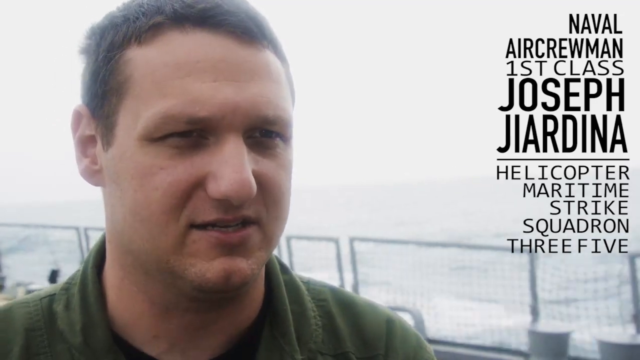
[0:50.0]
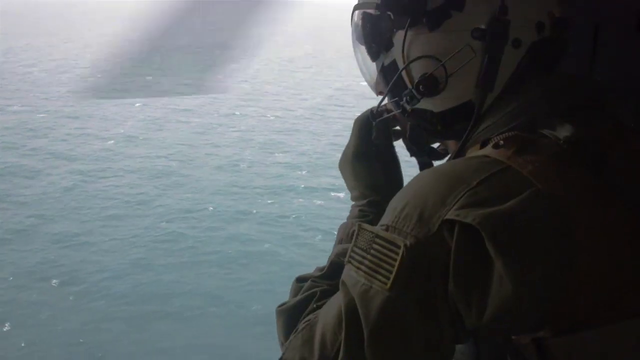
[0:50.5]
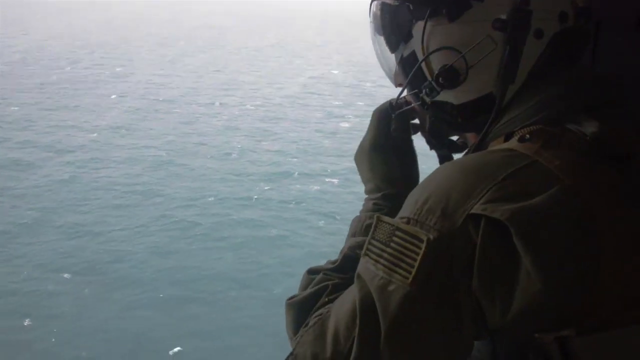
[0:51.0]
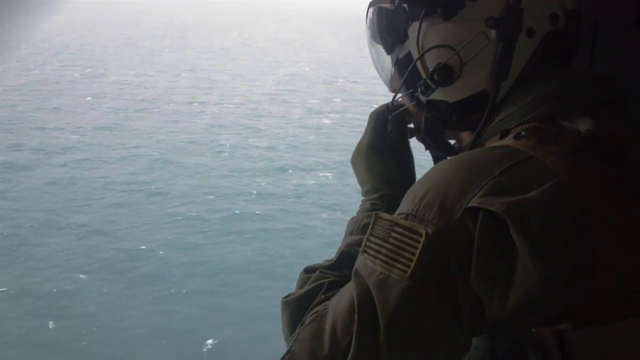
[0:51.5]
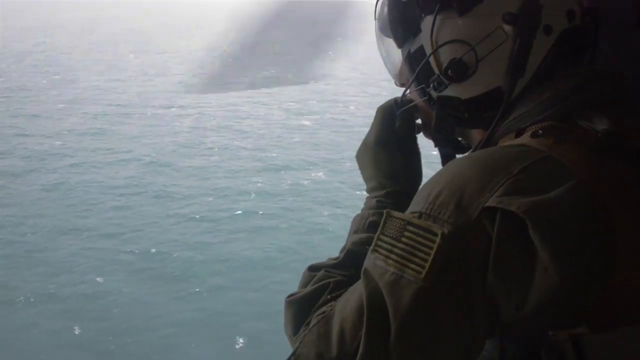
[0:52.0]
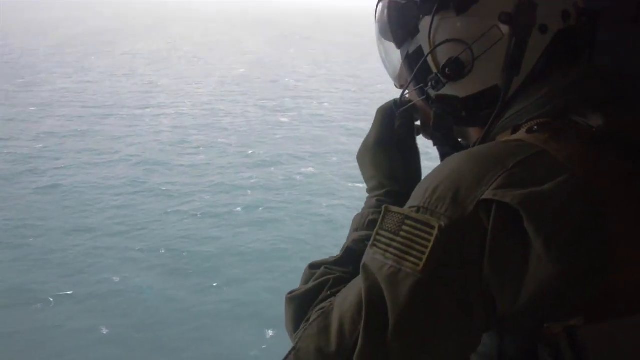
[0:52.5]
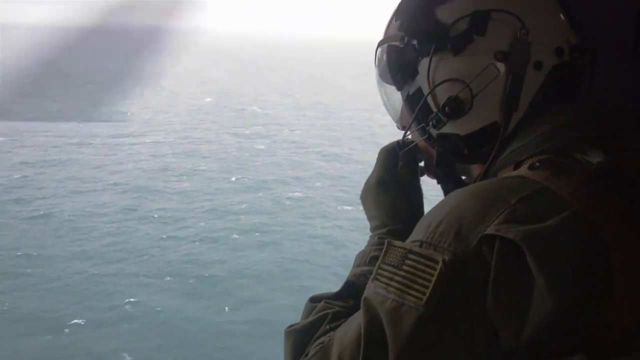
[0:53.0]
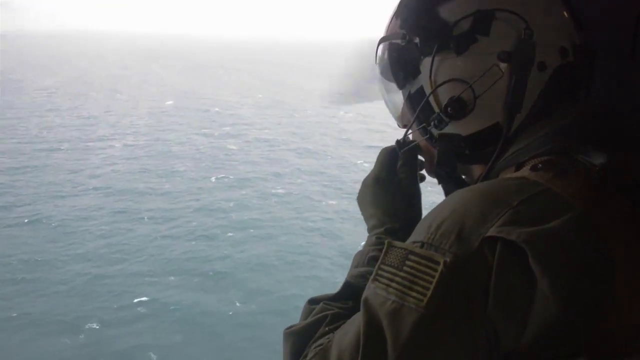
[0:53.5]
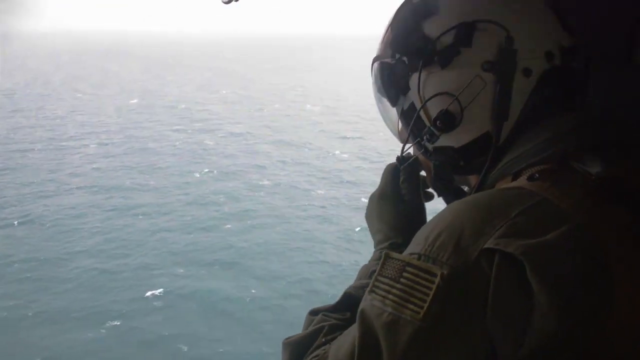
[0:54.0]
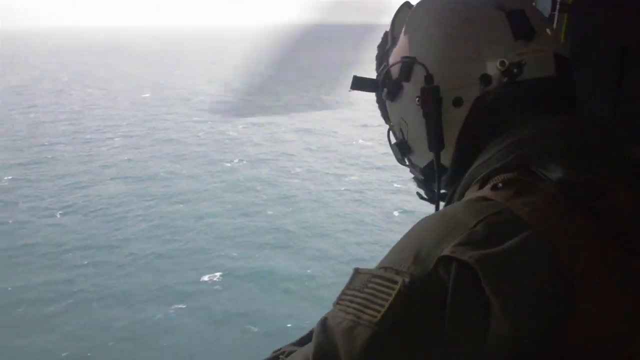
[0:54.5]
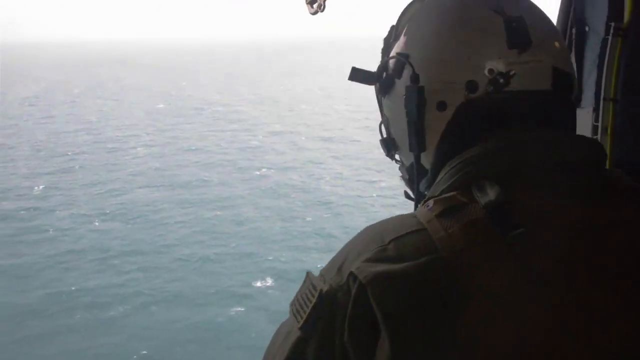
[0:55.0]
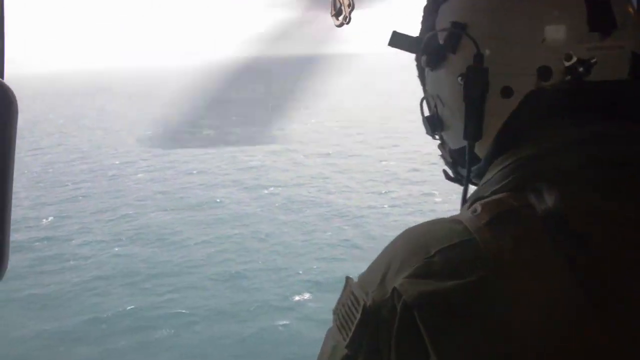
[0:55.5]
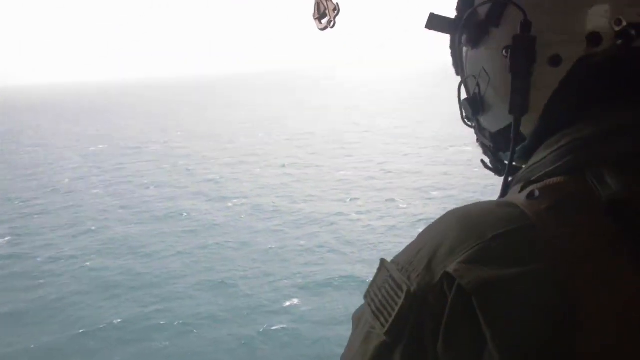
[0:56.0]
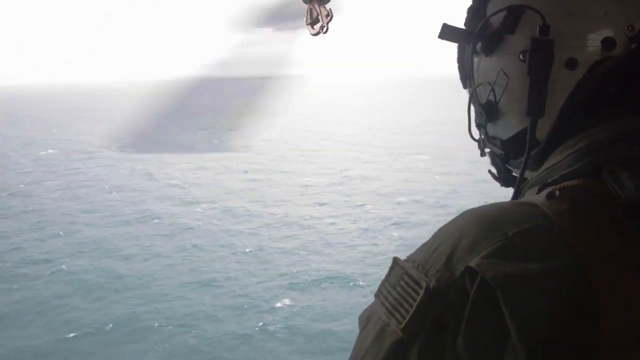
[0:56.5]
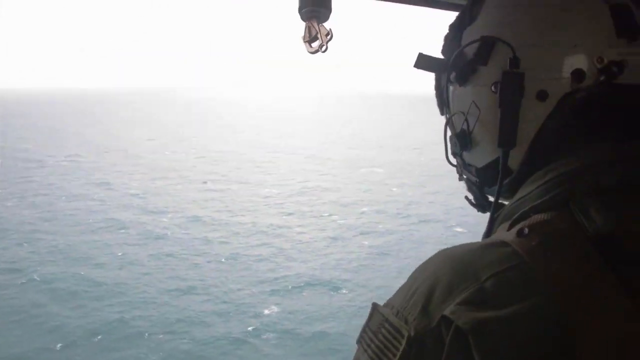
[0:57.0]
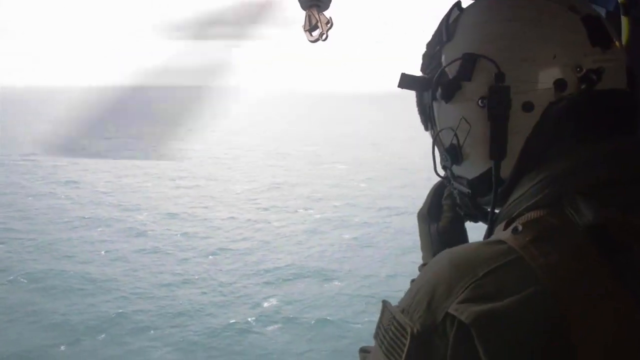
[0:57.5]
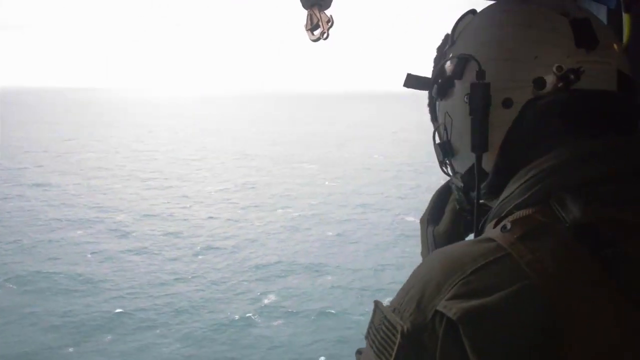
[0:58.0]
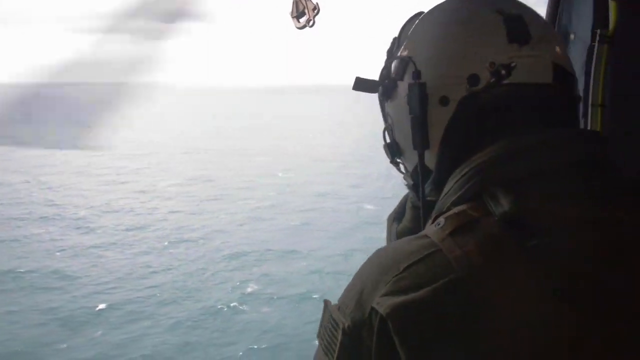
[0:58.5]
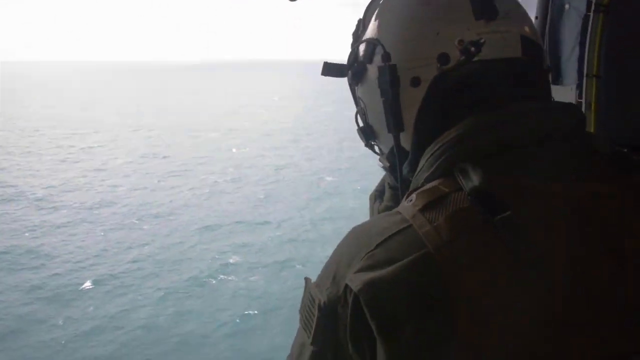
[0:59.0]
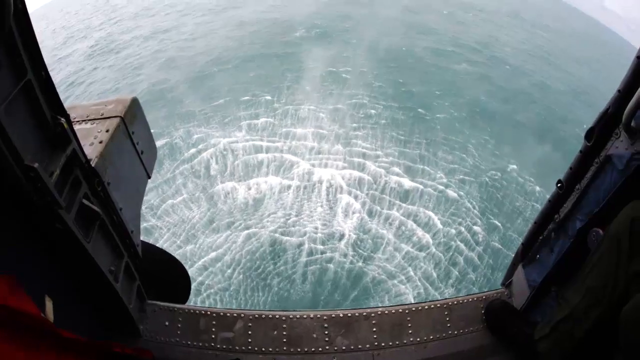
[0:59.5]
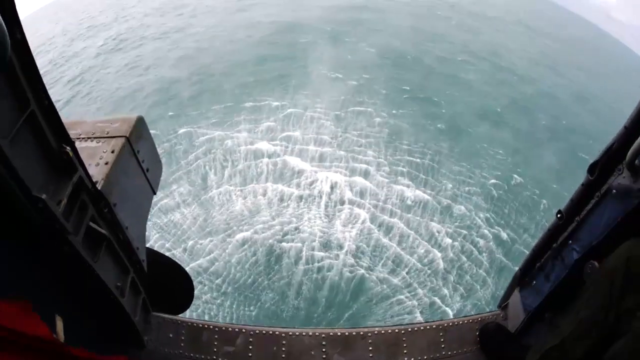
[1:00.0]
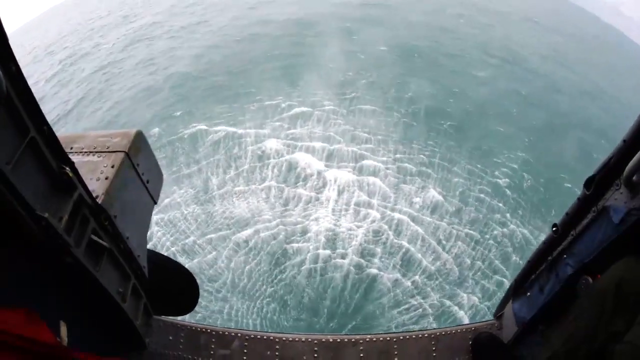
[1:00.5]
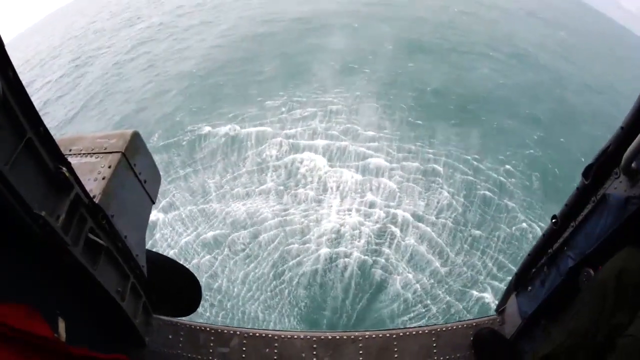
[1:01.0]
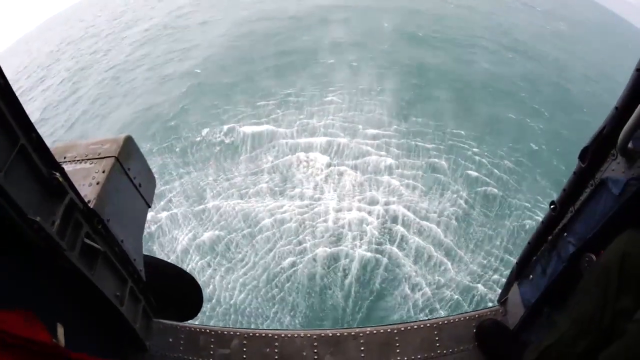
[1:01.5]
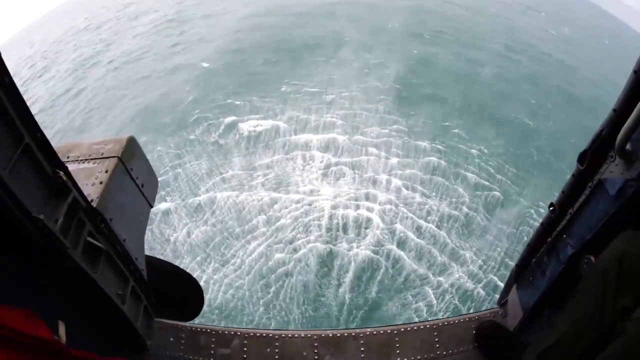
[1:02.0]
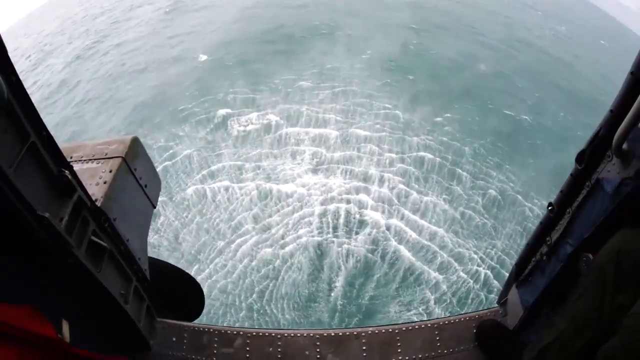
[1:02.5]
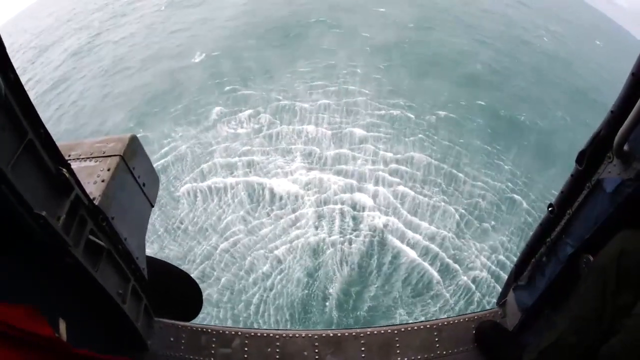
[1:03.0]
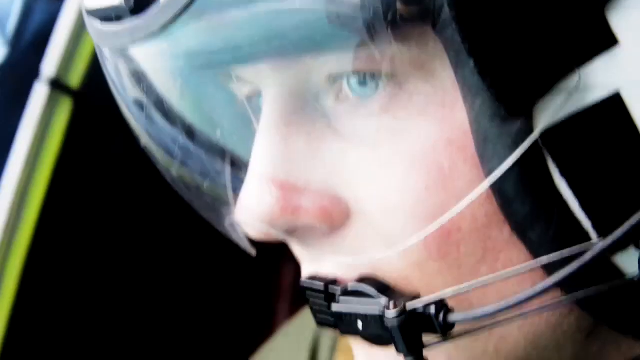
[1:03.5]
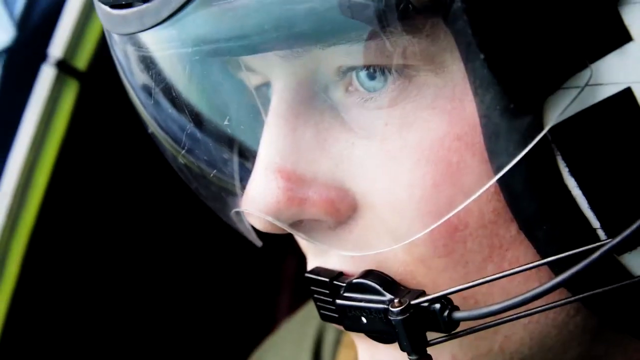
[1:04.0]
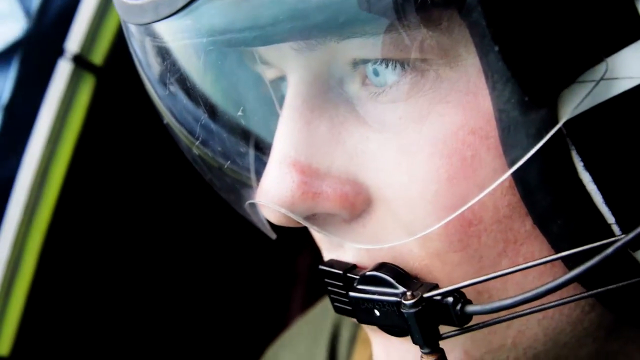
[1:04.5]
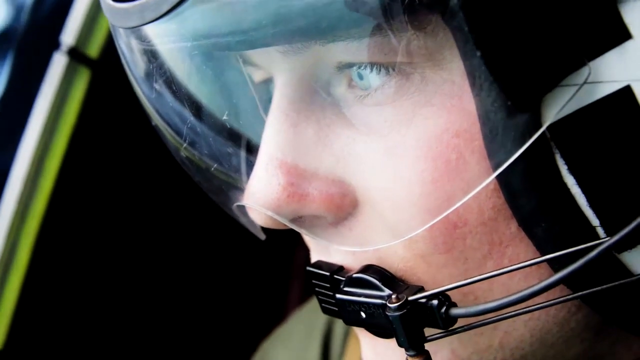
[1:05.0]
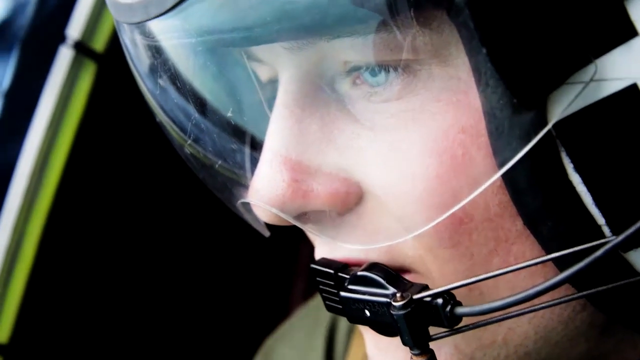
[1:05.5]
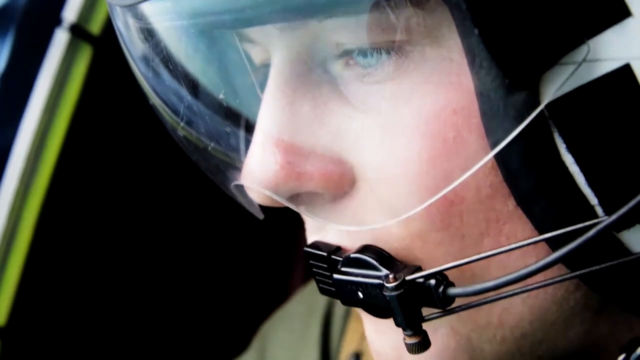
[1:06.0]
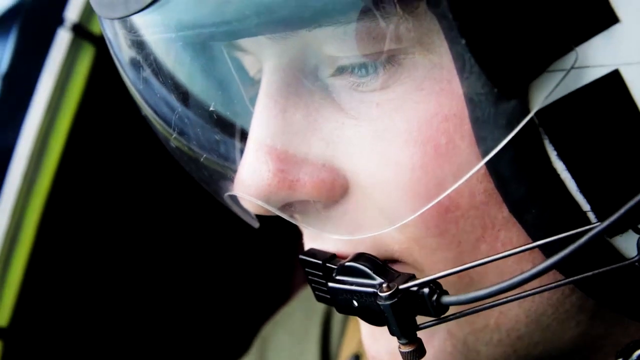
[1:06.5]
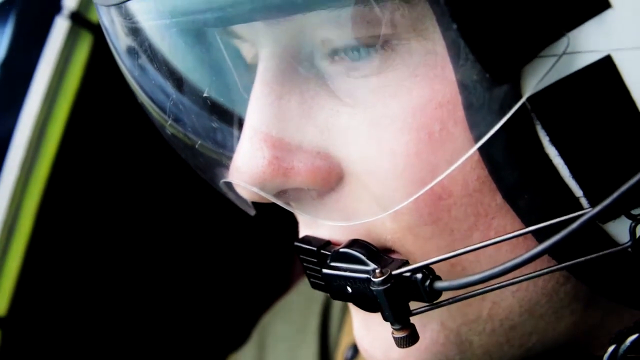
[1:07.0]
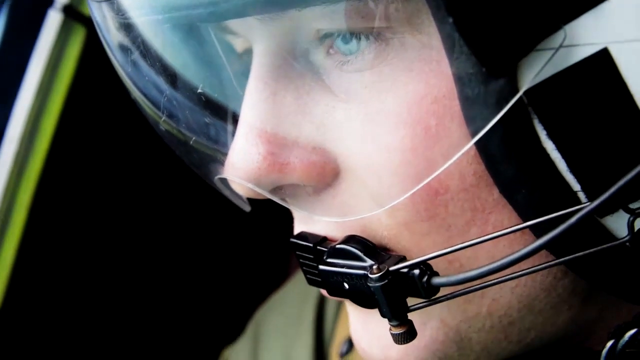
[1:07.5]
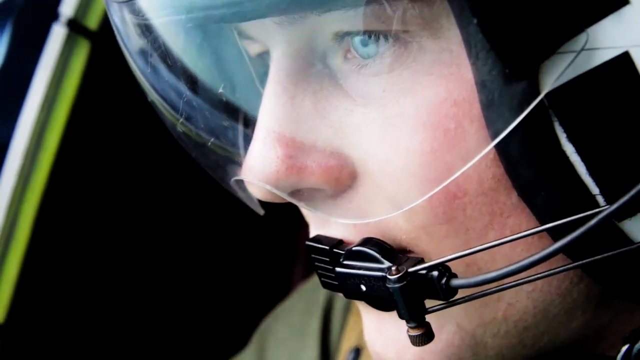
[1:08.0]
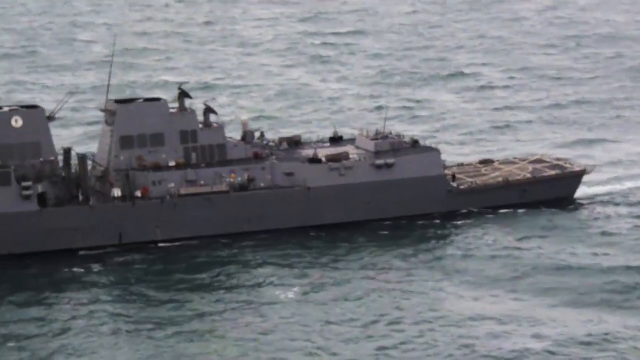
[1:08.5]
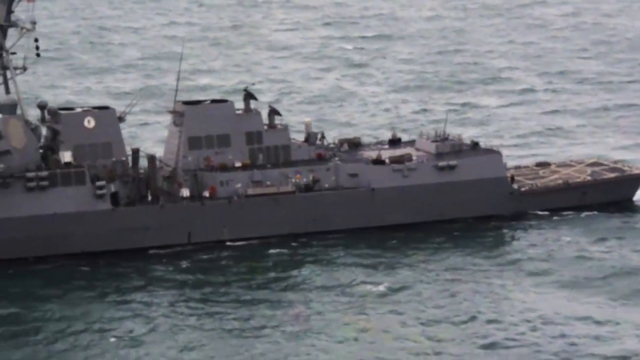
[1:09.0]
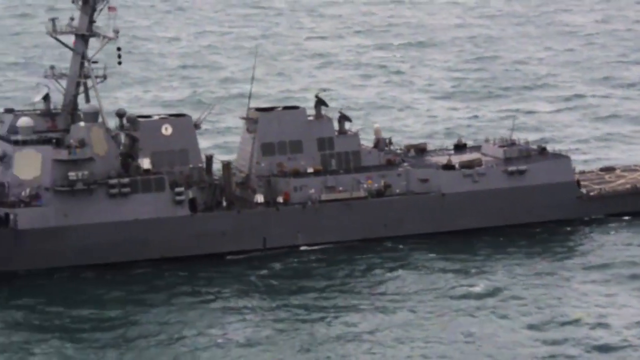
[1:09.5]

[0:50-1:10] An airman, possibly a pilot, looks over the ocean, appearing to be about to jump or waiting for the moment to jump. A body cam view from the same airman shows a vertical drop from the helicopter, and the water surface ripples with foam from the helicopter's spinning blades. A close-up shows one of the pilots or air crewmen, who has icy blue eyes, looking at something and talking to someone. A shot of the battleship from afar follows. The segment is a montage of different situations: the aircrew, the battleship, and body cam footage.